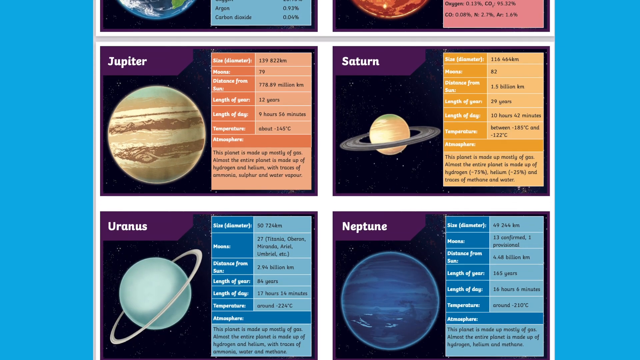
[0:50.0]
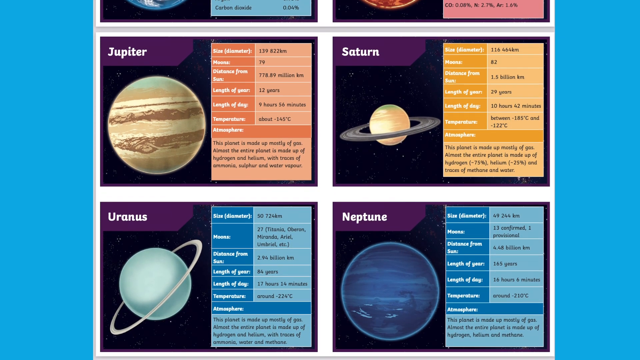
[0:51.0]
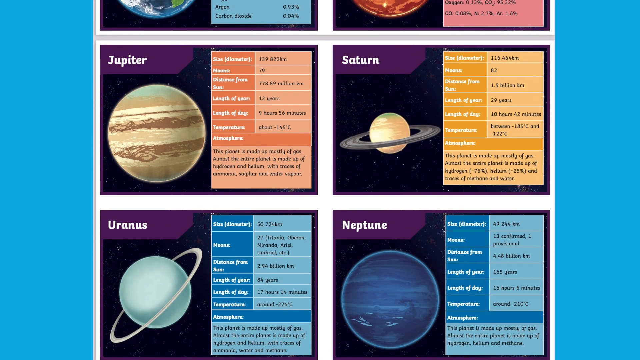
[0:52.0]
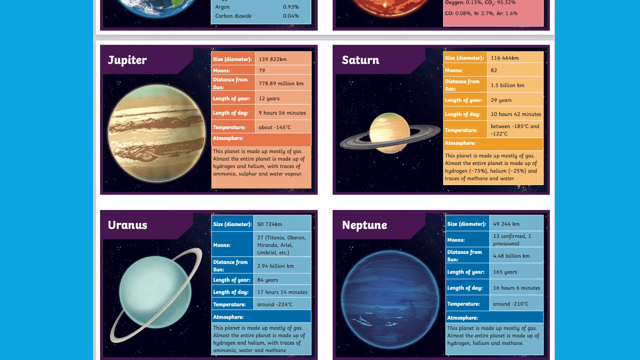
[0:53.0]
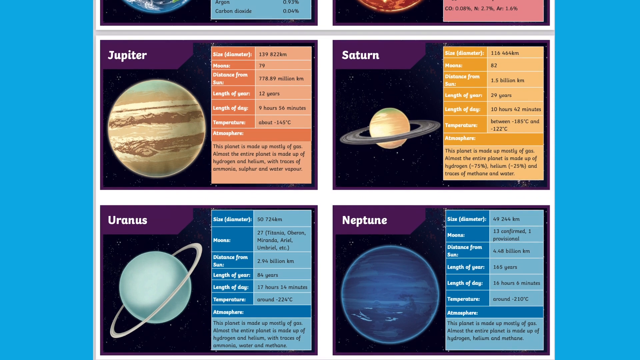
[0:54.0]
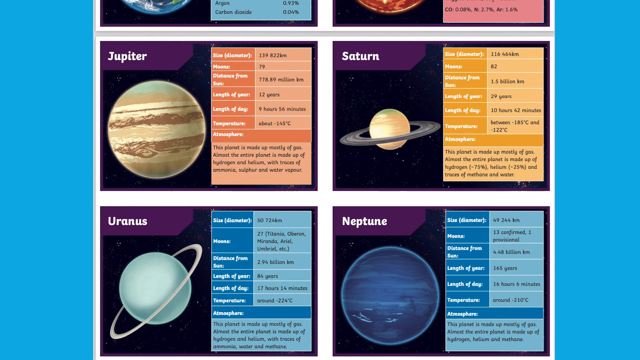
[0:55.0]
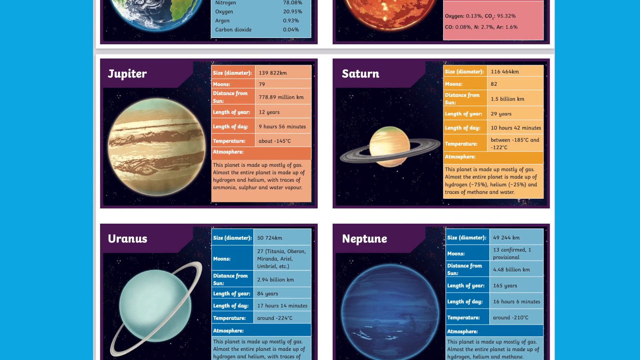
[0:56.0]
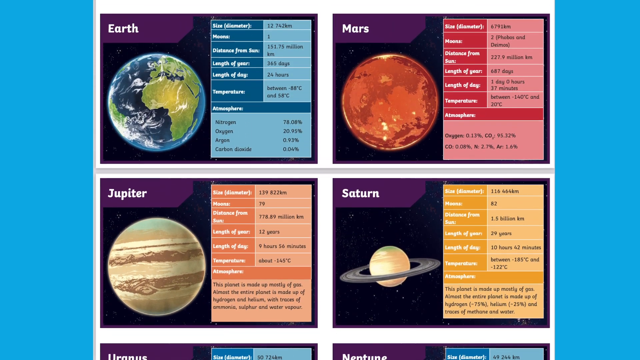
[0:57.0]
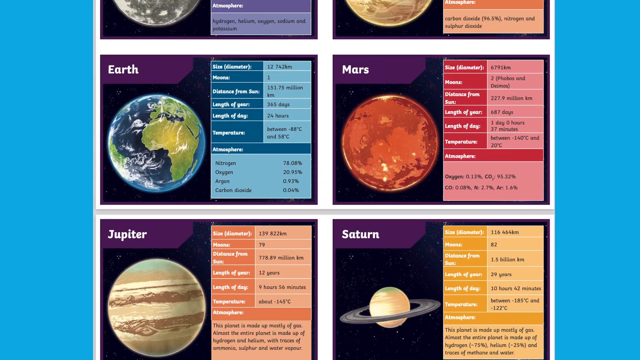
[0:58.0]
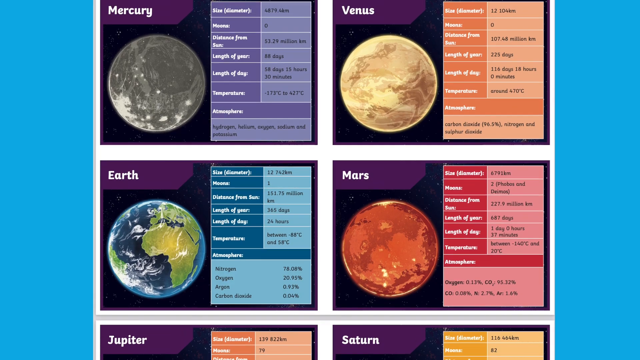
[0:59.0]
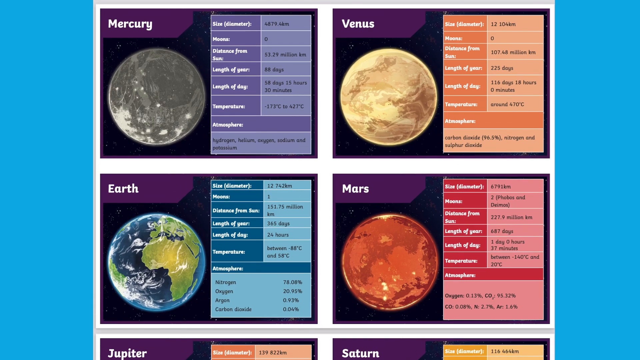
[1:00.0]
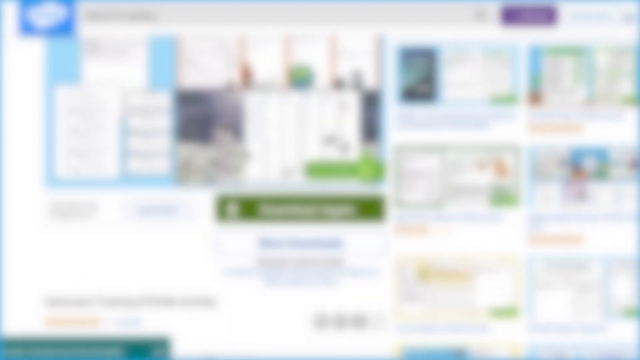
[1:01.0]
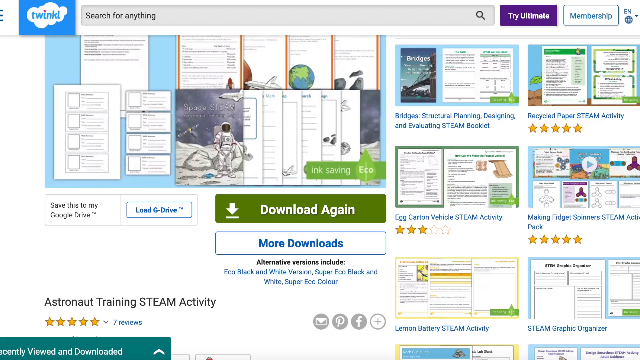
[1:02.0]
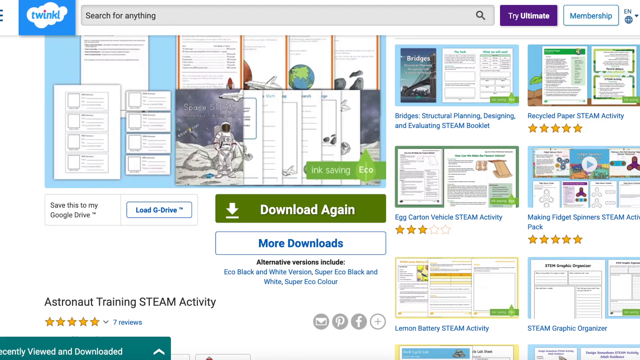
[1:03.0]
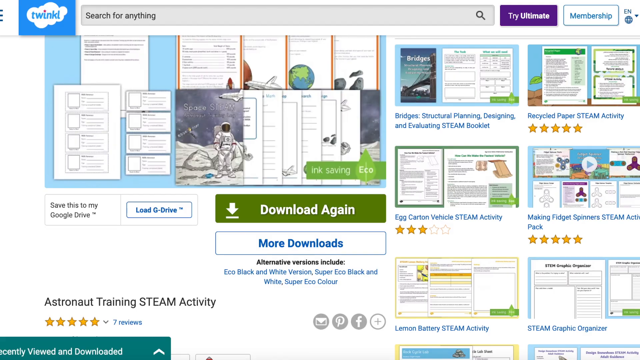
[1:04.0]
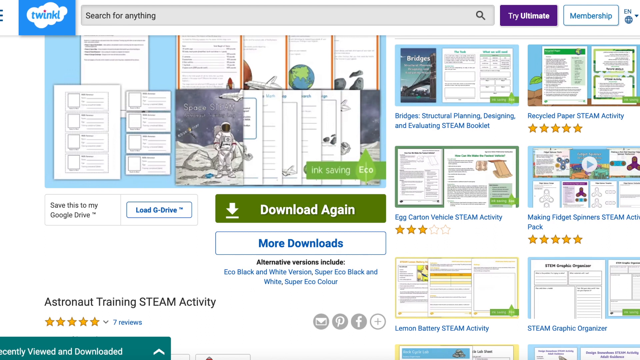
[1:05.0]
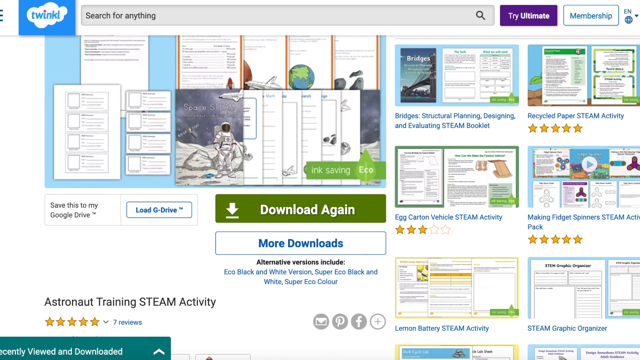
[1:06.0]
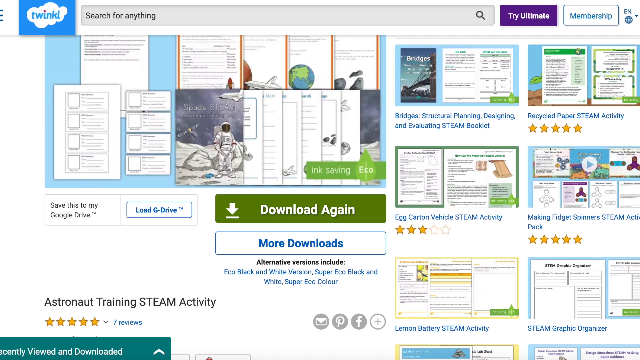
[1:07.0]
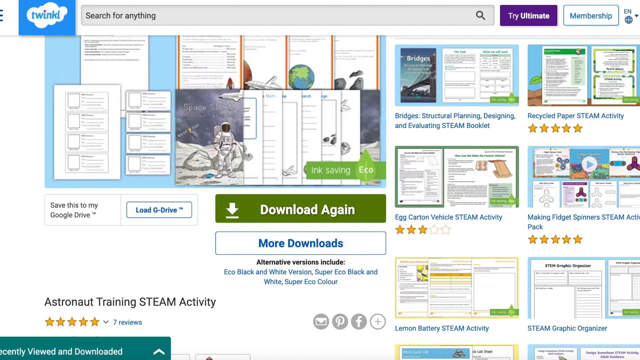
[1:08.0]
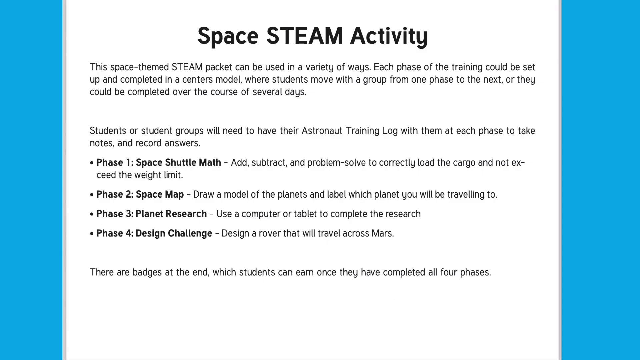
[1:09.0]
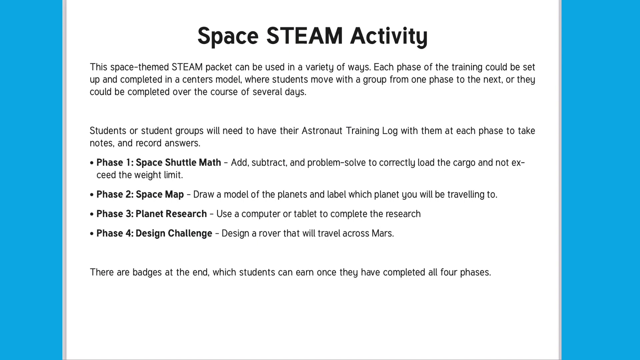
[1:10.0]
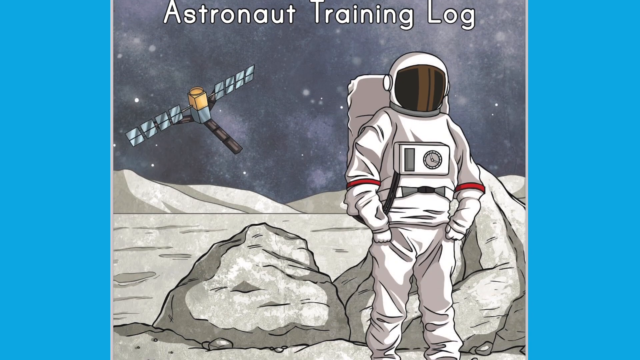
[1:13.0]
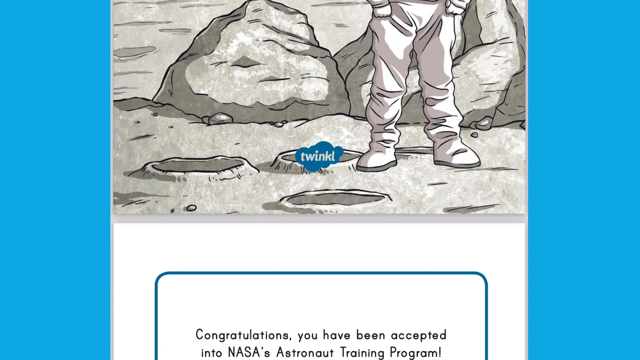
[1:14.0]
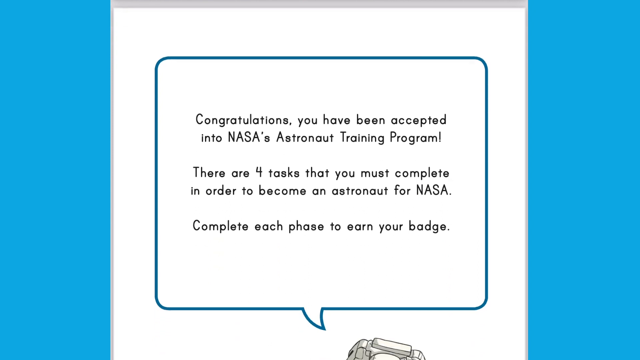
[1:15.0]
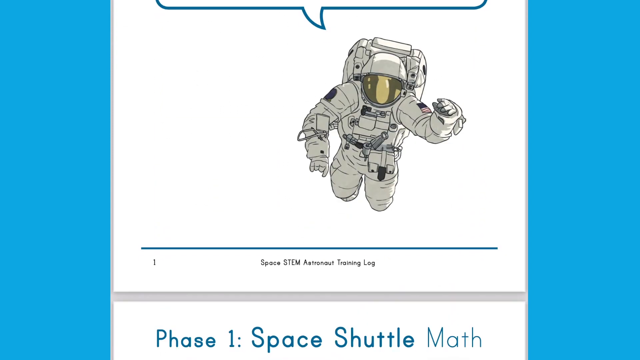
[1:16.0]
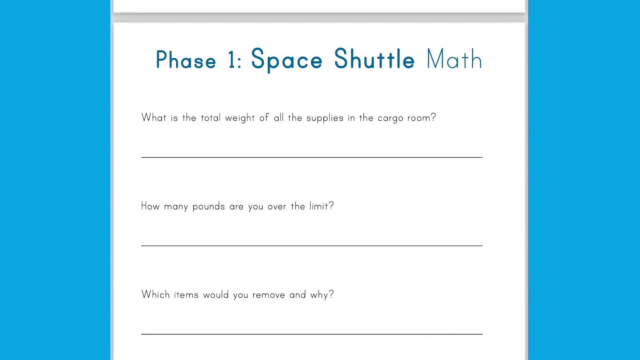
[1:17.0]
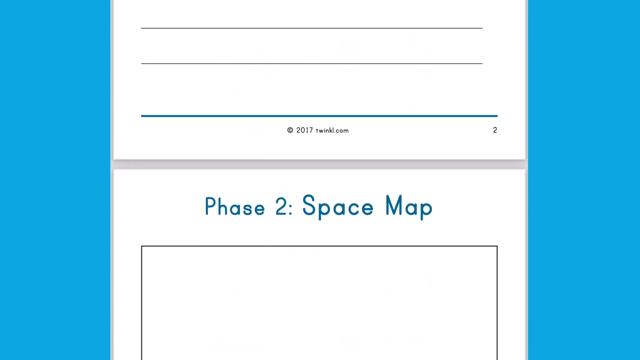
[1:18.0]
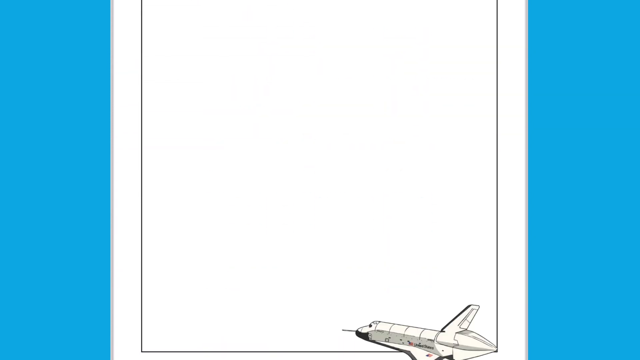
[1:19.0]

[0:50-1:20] The website shows poster boards with information about the different planets. Jupiter, Saturn, Uranus and Neptune are visible, and to the right of them are images of how the planets actually look, also including Earth and Mars. Further right is a card that resembles a fact sheet for the planets. The page scrolls up, revealing all of the planets in the solar system. The main page then appears with other downloads, including the Space STEAM Activity page with a guide listing Phase 1, Phase 2, Phase 3 and Phase 4 as Space Shuttle Math, Space Map, Planet Research and Design Challenge. A poster titled "Space STEAM Astronaut Training Log" shows an astronaut standing on the moon, with the Space Shuttle and the International Space Station in the background. Scrolling down the page reveals worksheets.